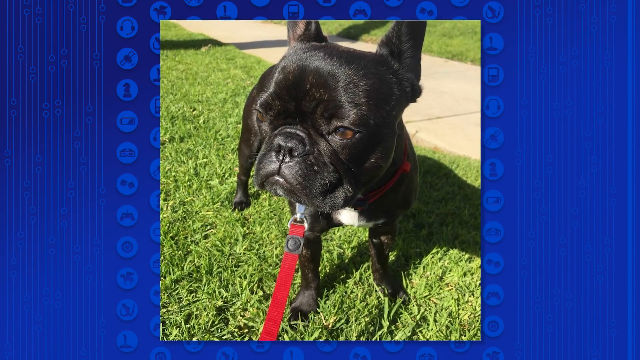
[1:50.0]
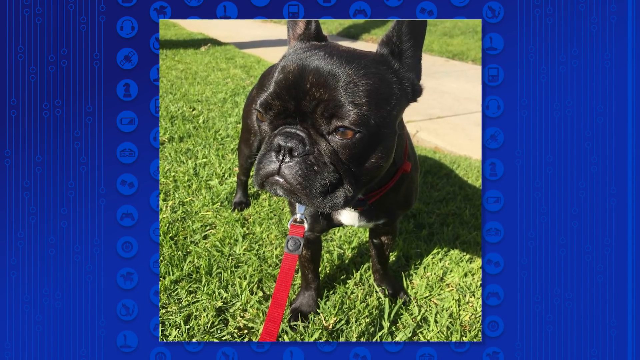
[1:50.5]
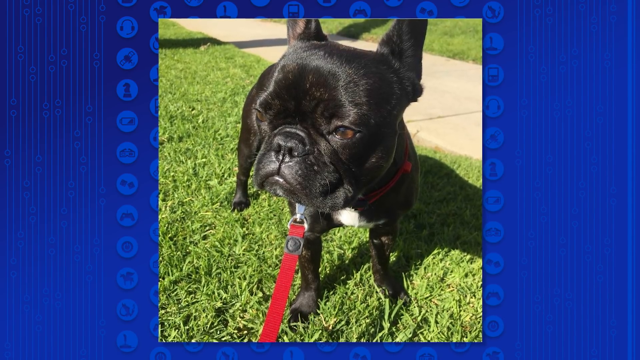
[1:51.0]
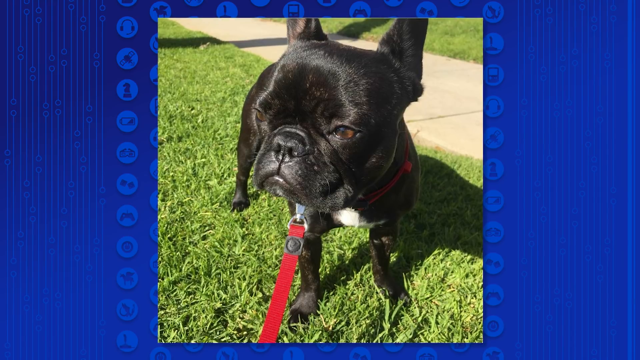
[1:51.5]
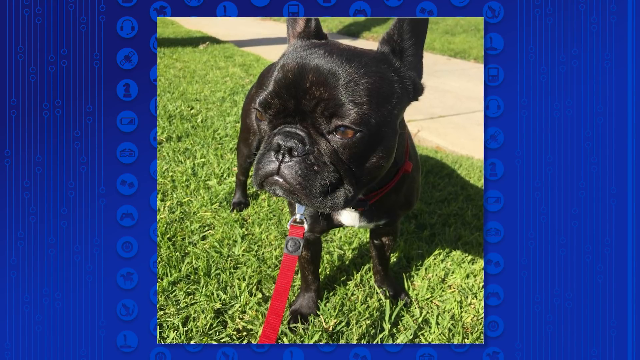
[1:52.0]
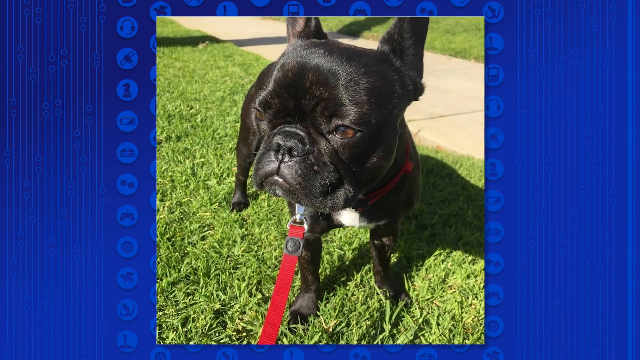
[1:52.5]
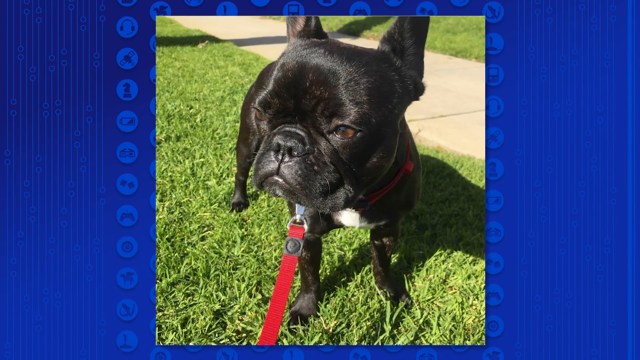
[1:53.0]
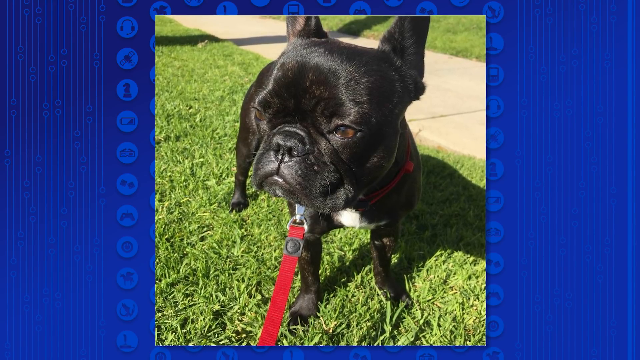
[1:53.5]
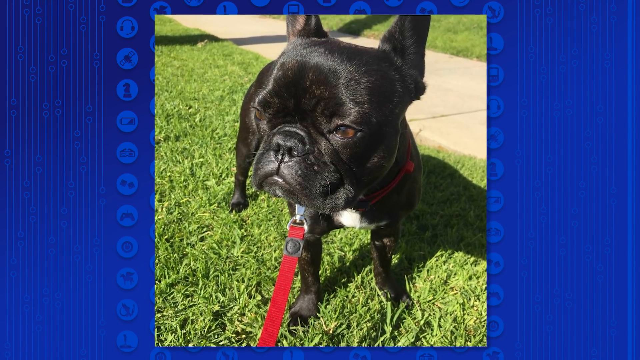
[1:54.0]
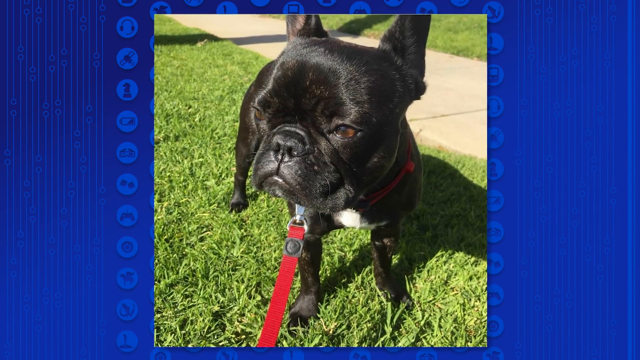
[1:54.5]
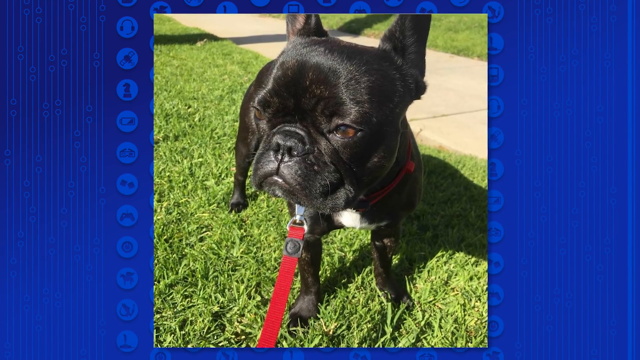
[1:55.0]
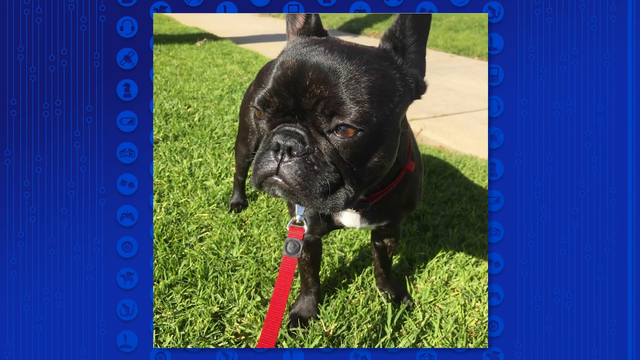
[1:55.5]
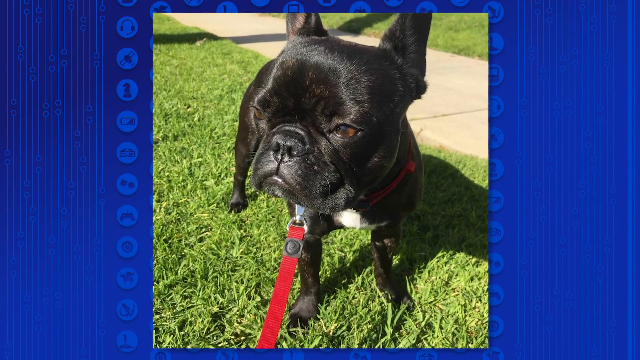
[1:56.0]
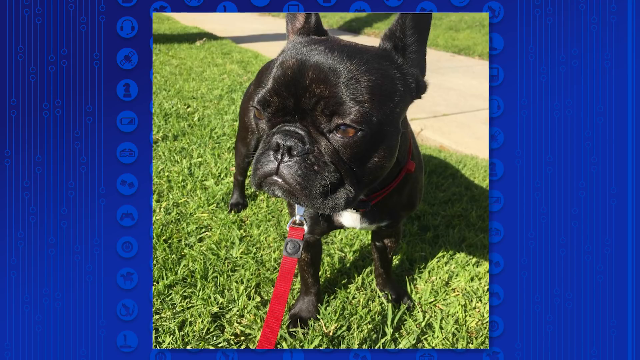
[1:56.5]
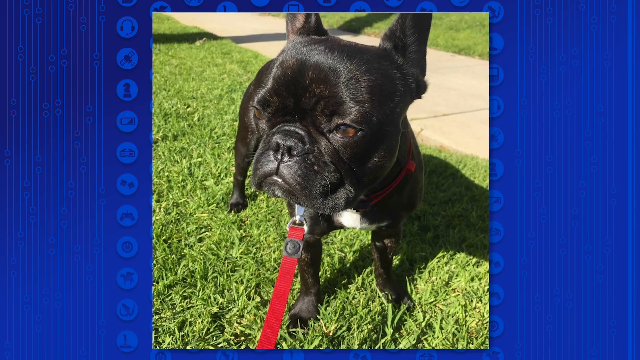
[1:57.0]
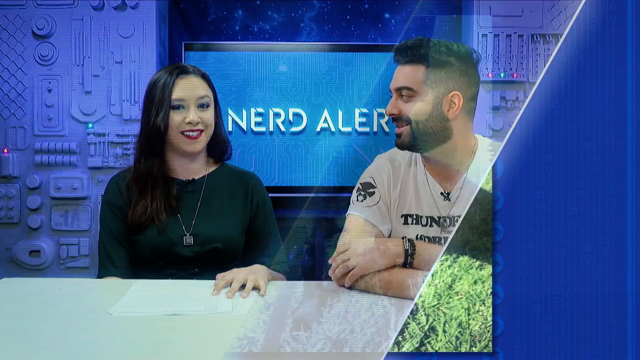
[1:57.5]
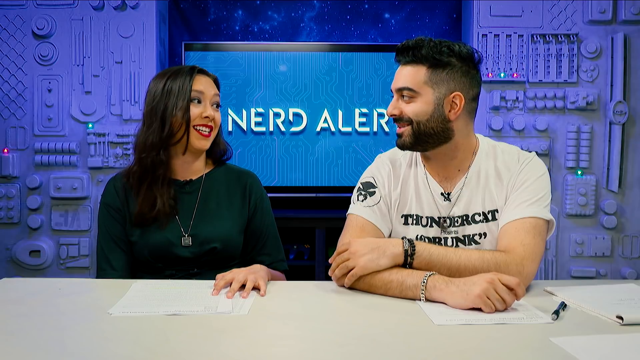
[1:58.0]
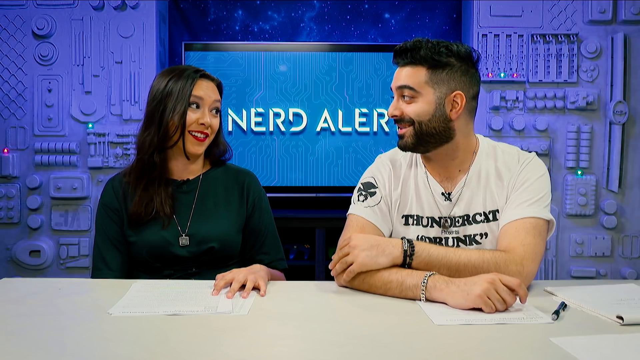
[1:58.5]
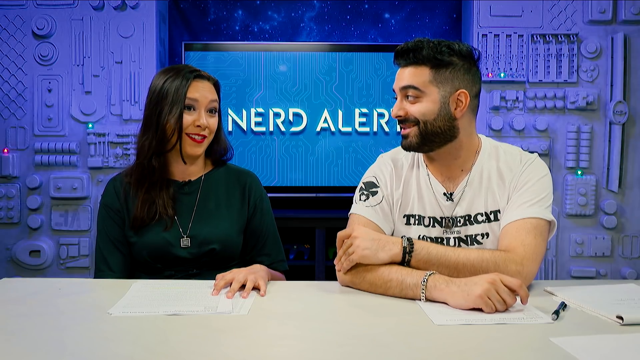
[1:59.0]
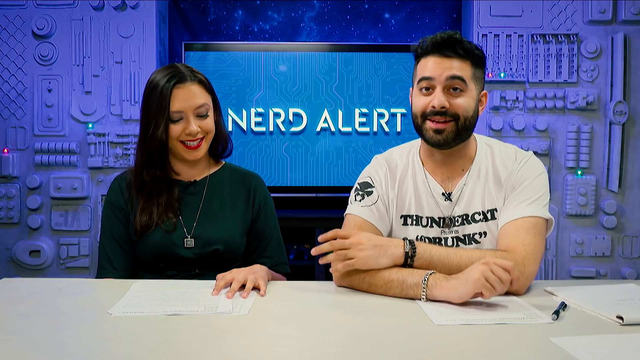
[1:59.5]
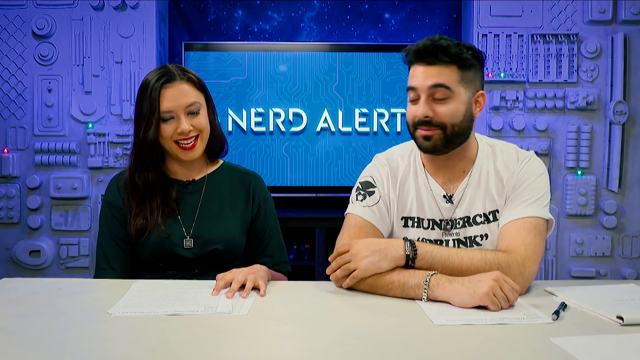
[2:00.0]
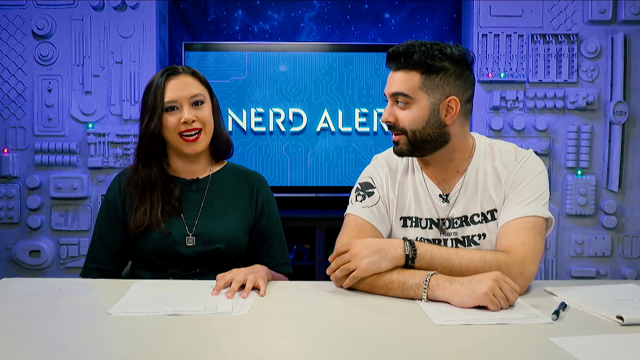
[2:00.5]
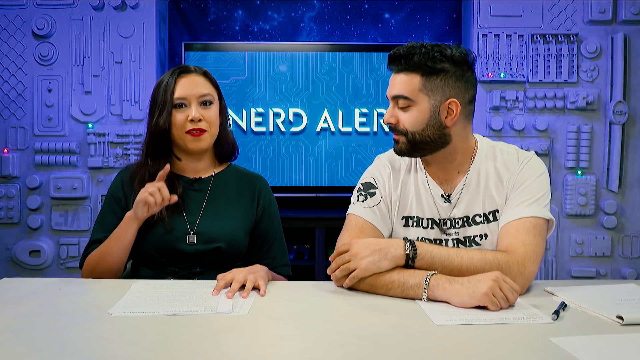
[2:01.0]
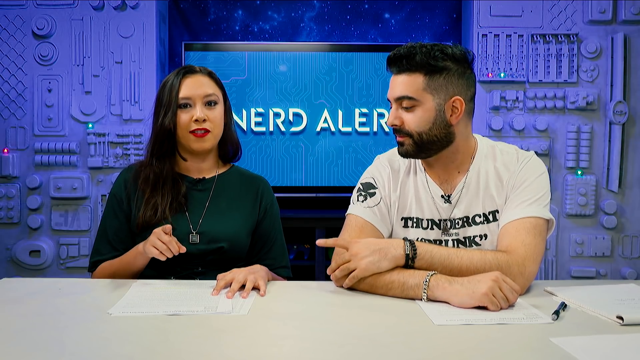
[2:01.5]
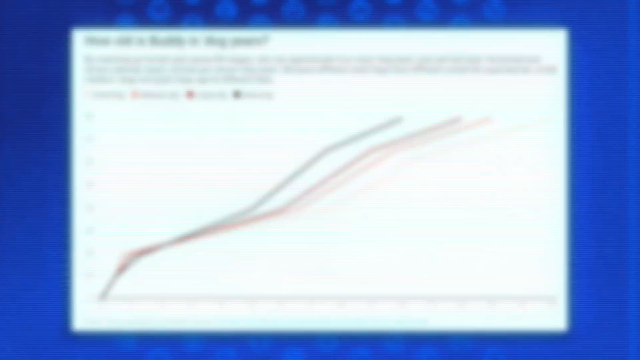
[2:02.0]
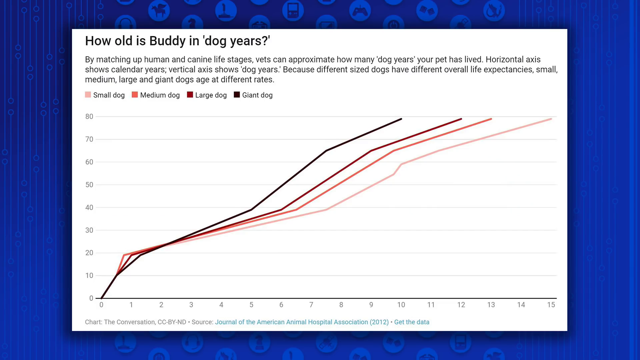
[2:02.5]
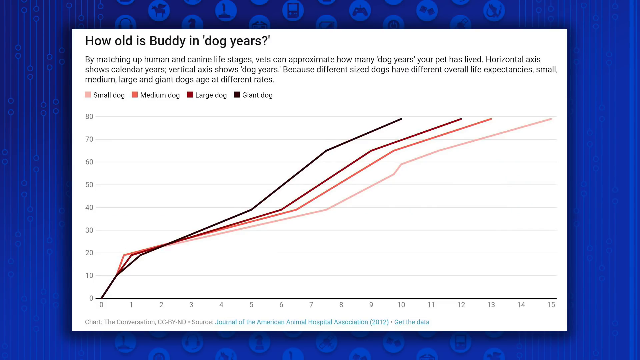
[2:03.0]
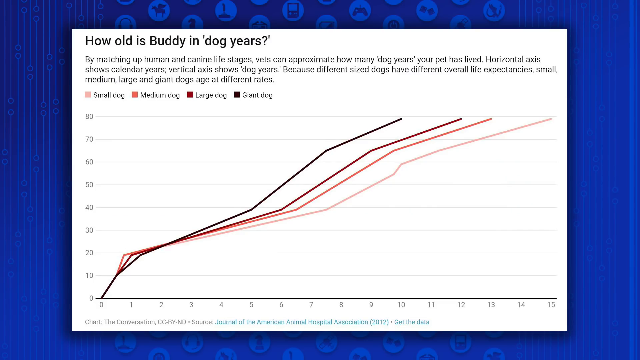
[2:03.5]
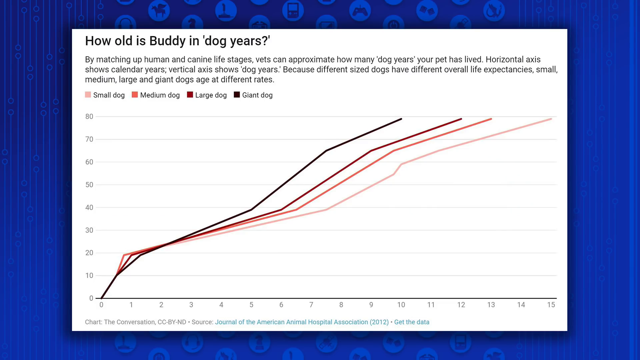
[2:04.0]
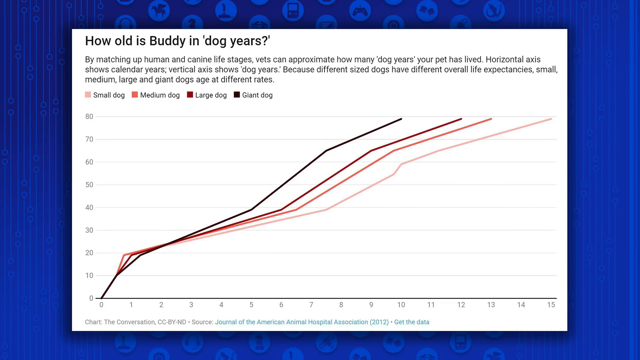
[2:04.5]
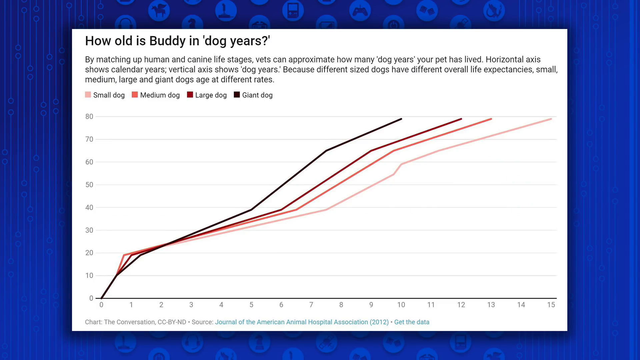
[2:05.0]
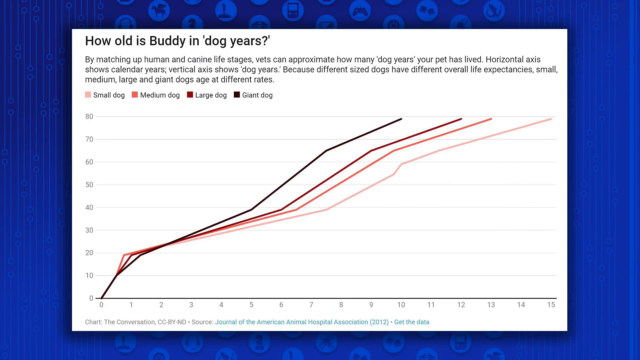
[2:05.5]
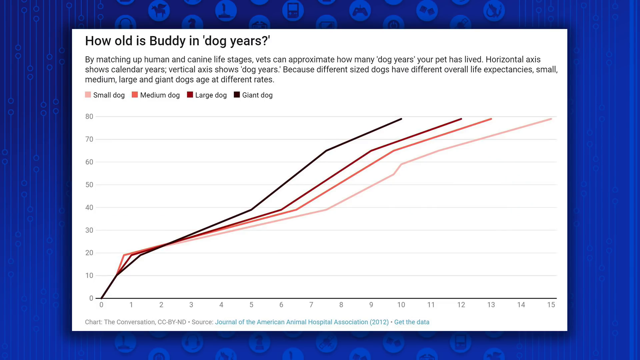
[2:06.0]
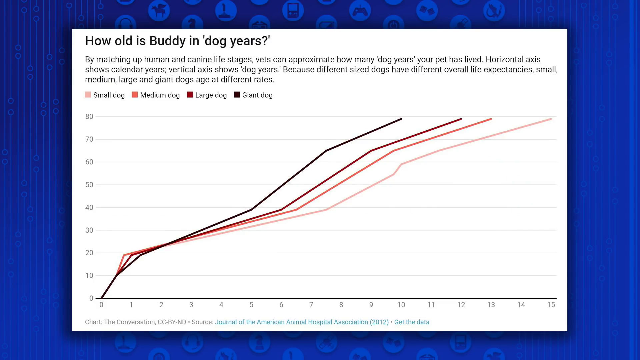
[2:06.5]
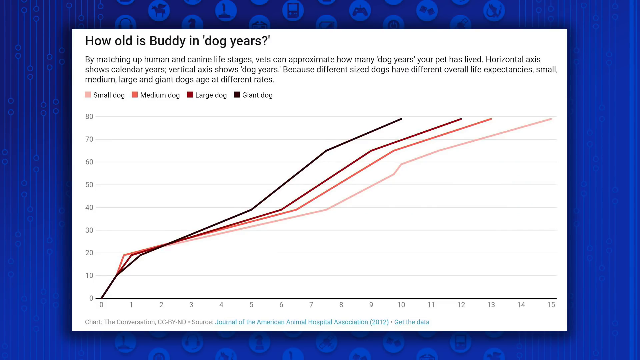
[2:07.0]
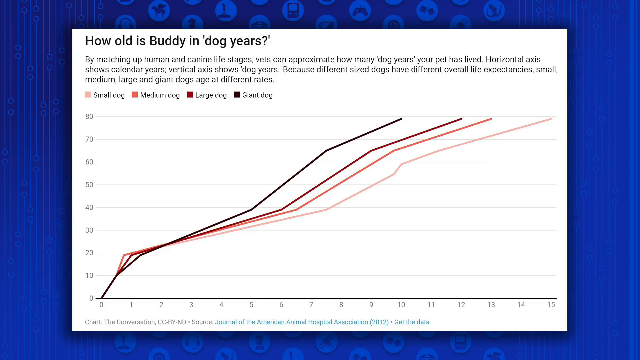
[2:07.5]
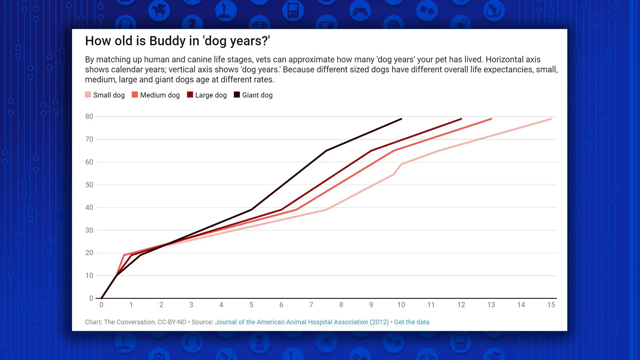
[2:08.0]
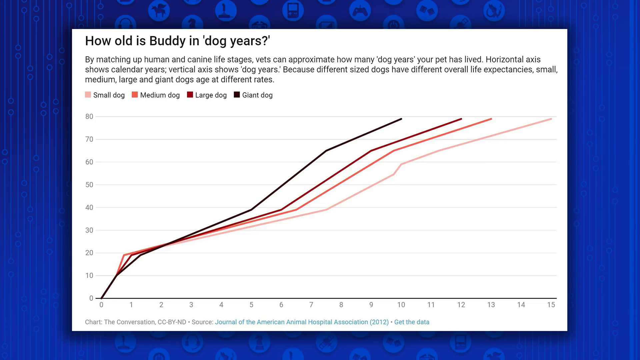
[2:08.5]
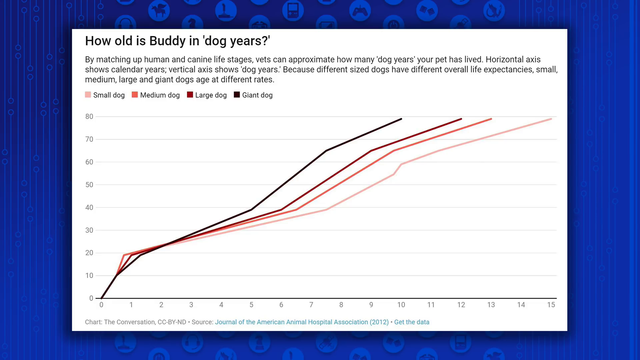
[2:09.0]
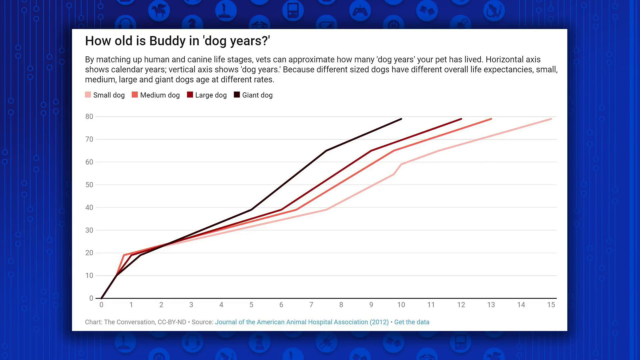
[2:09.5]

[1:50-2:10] A small black dog with a white chest, which looks like a chihuahua, wears a red leash and stands on green grass. A gray path that looks like pavement runs between the lawn, with green lawn next to the pavement. The background is blue with small icons scattered on it. A close-up then shows the woman in green with red lipstick talking to the man in a white t-shirt, who has a mohawk hairstyle with long hair in the middle of his head and short hair at the sides. Another close-up shows what looks like a graph about the age of a dog, with the subtopic "how old is Buddy in dog years?" written in black. A paragraph begins "by matching up human and canine life stages" and includes "Horizontal axis shows calendar years. Vertical axis shows dog years". In the legend, peach represents small dogs, orange represents medium dogs, burgundy represents large dogs and black represents giant dogs. The y-axis on the left counts up to 80, the x-axis counts up to 15, and the lines go upward.